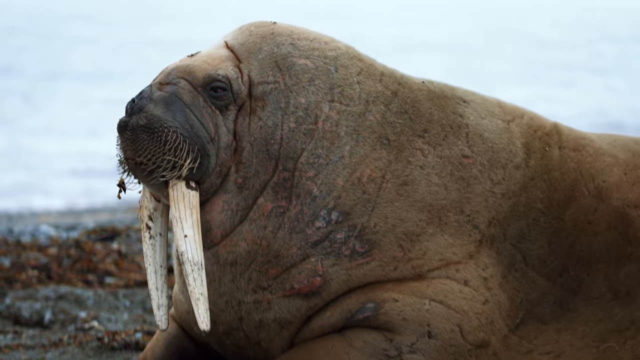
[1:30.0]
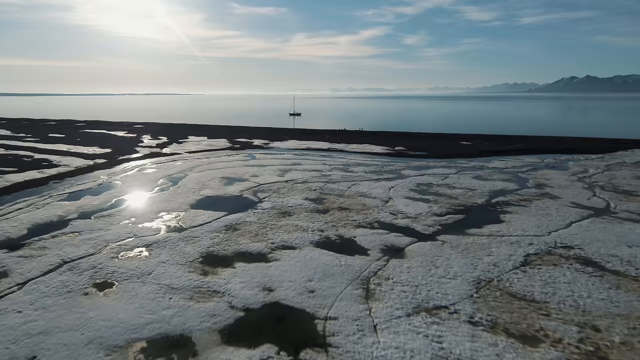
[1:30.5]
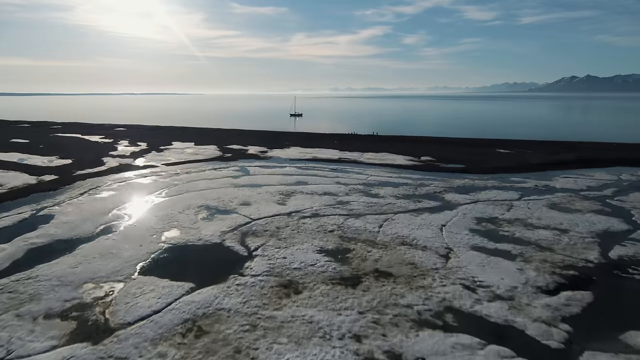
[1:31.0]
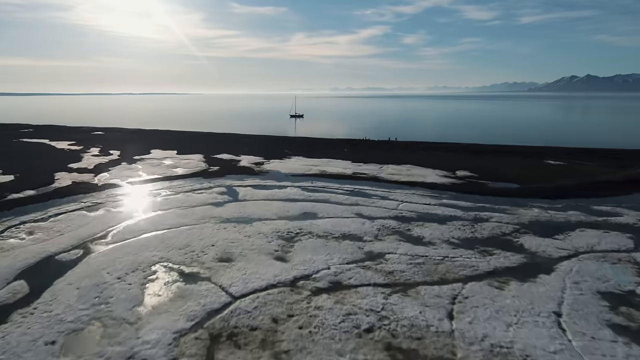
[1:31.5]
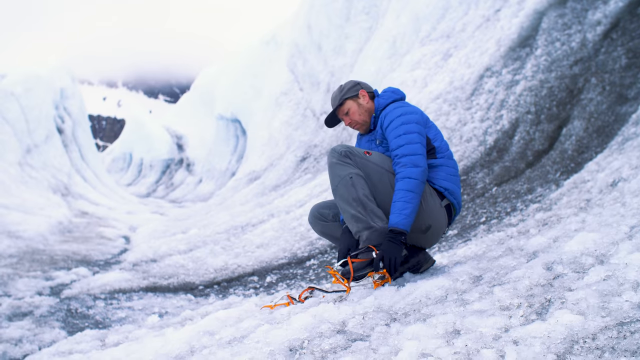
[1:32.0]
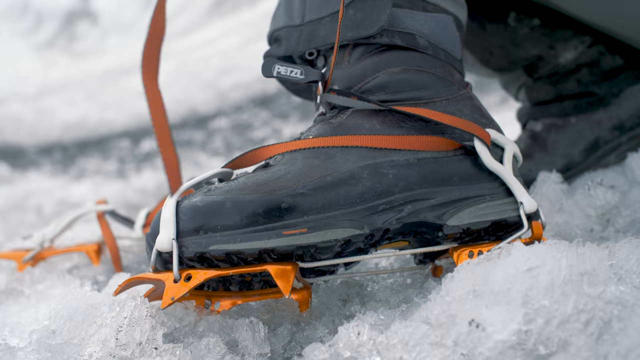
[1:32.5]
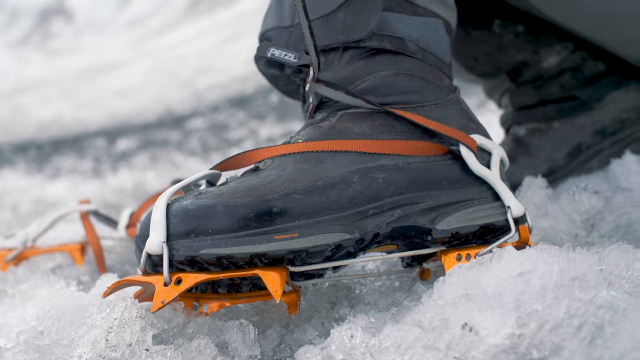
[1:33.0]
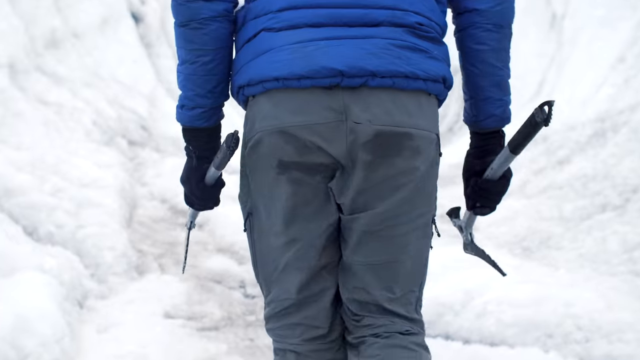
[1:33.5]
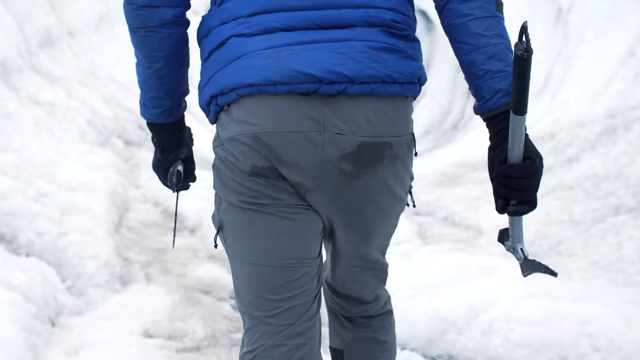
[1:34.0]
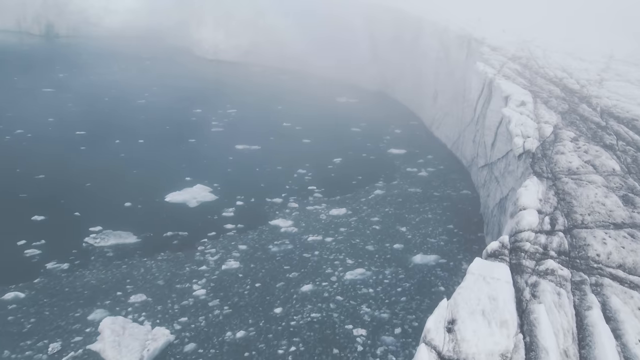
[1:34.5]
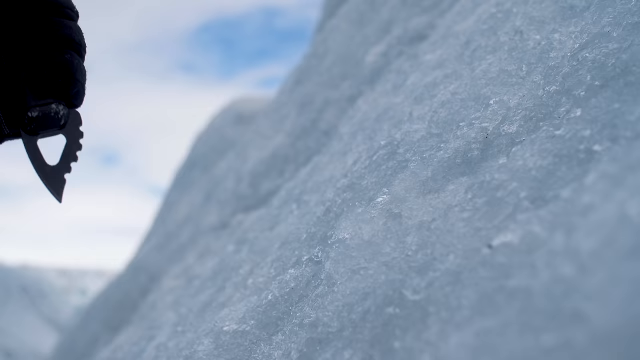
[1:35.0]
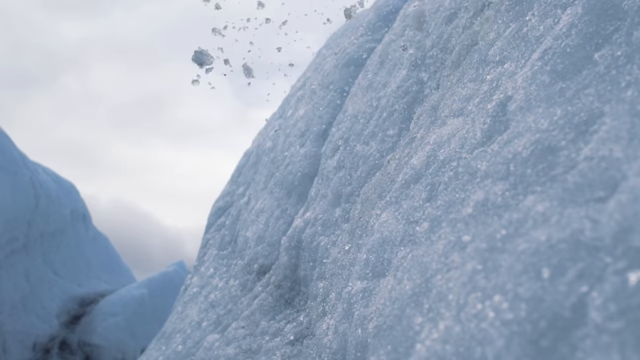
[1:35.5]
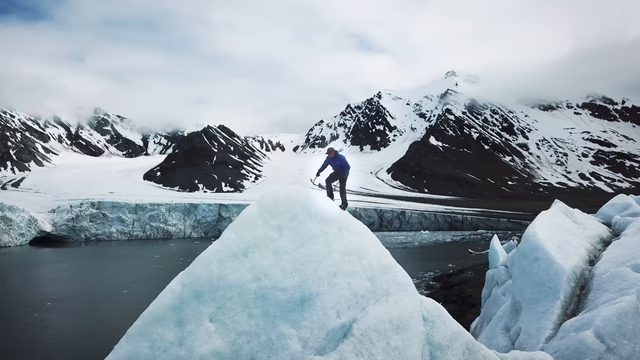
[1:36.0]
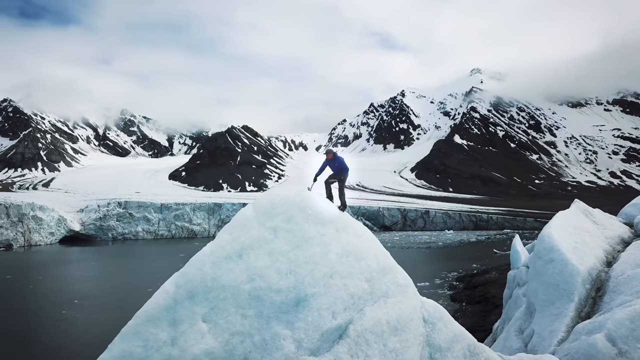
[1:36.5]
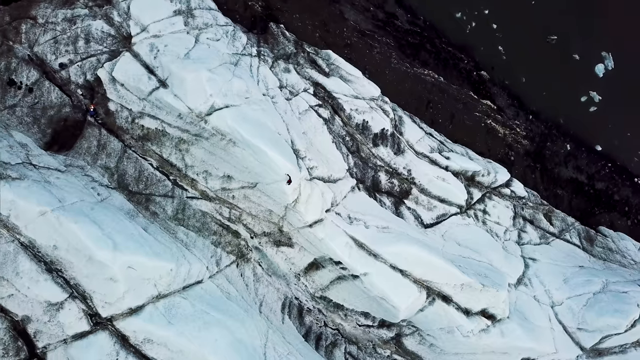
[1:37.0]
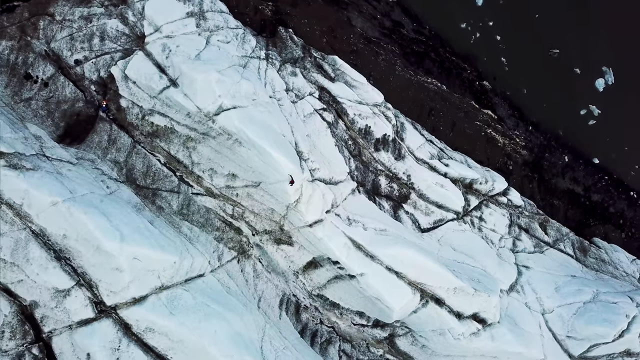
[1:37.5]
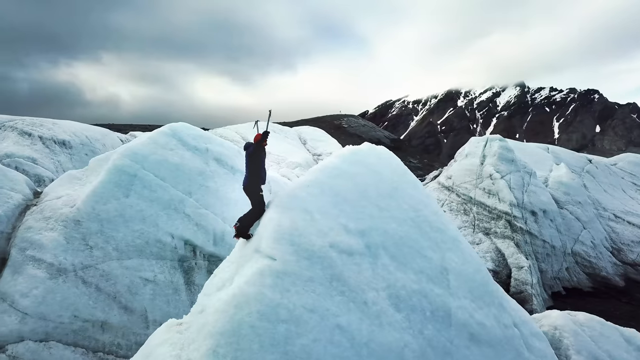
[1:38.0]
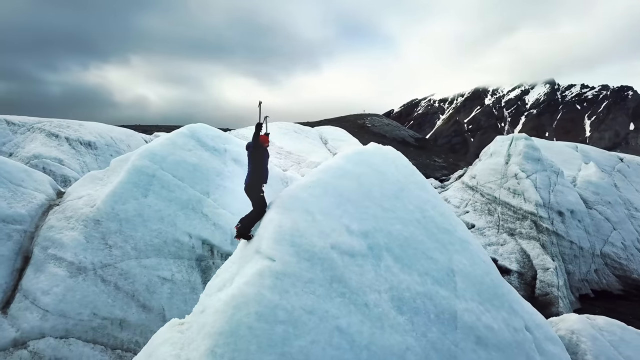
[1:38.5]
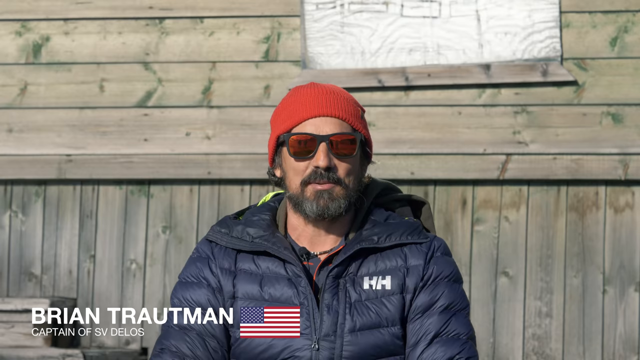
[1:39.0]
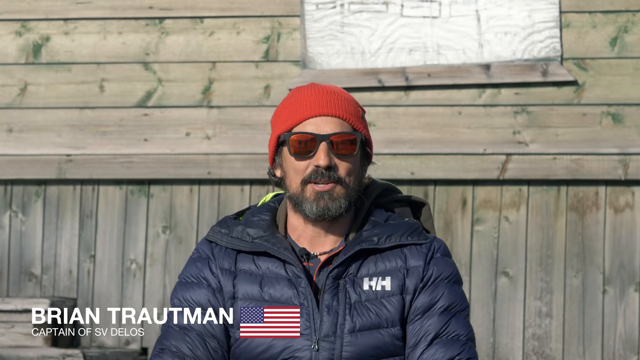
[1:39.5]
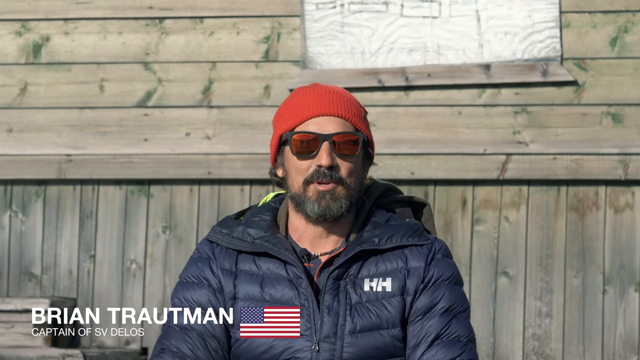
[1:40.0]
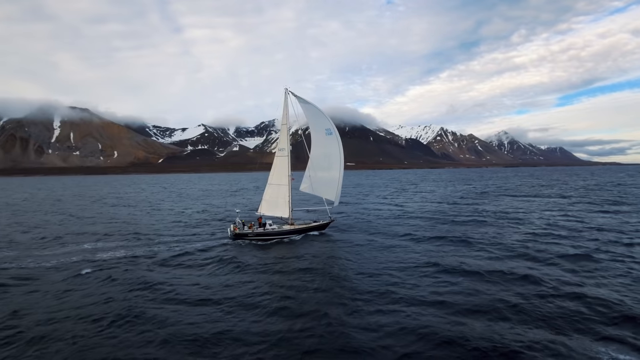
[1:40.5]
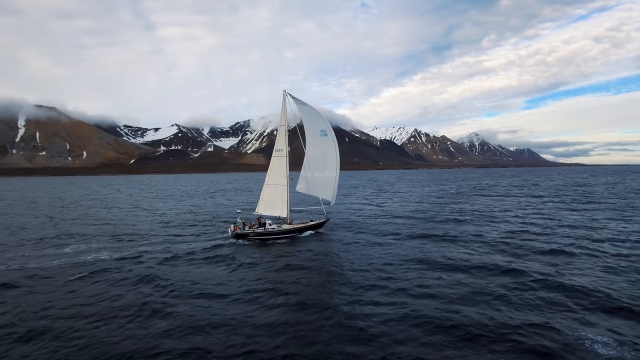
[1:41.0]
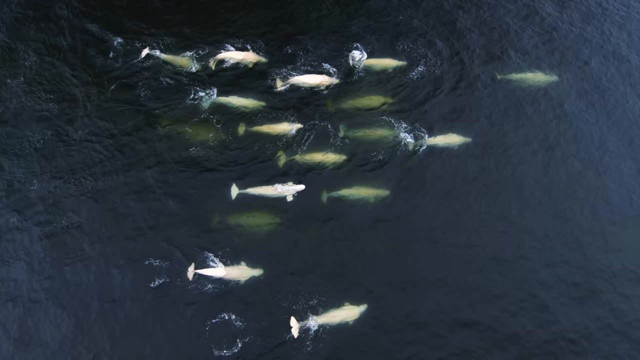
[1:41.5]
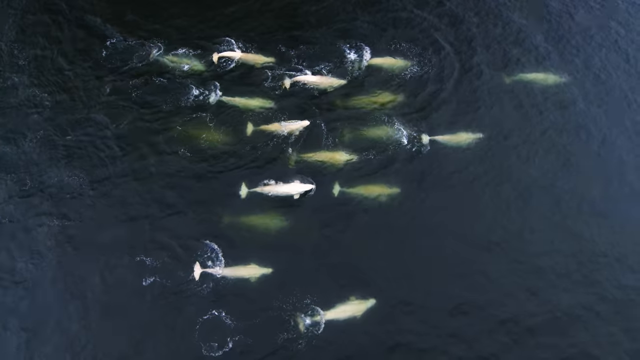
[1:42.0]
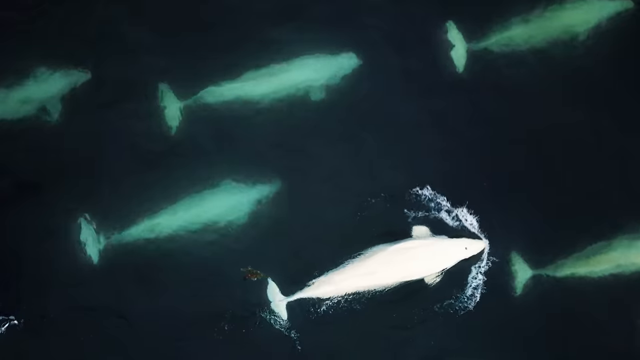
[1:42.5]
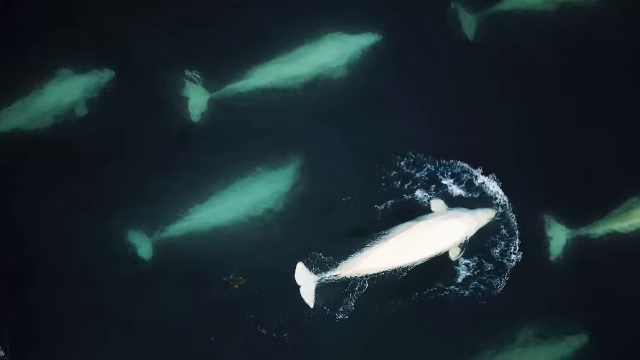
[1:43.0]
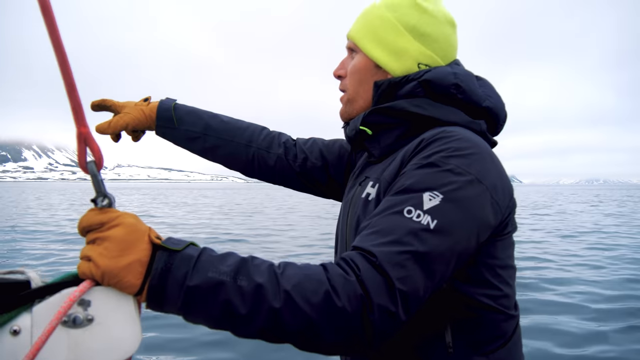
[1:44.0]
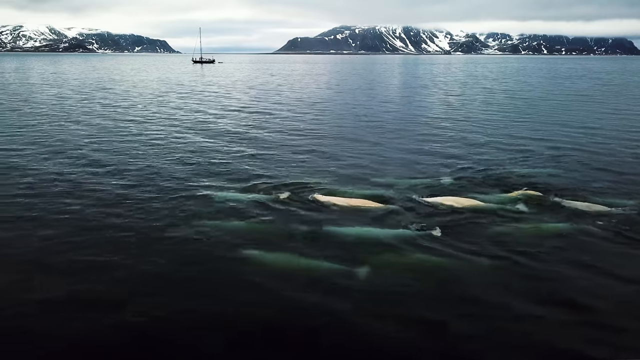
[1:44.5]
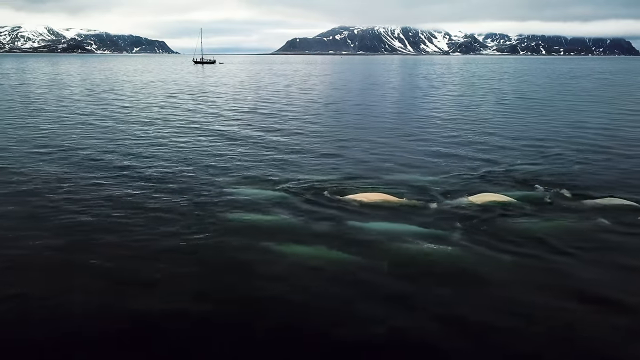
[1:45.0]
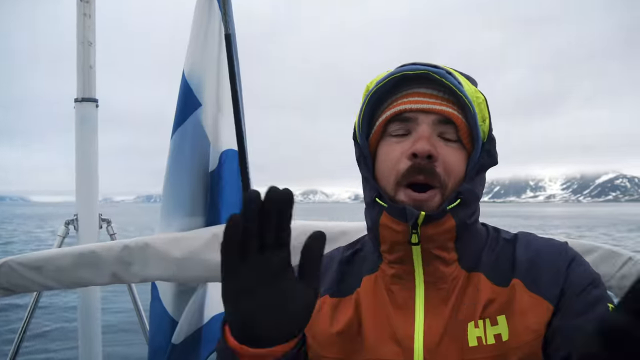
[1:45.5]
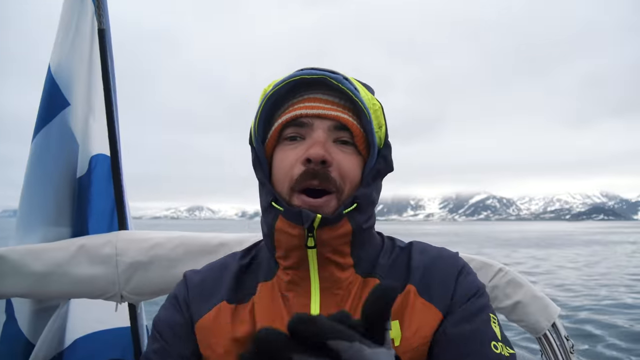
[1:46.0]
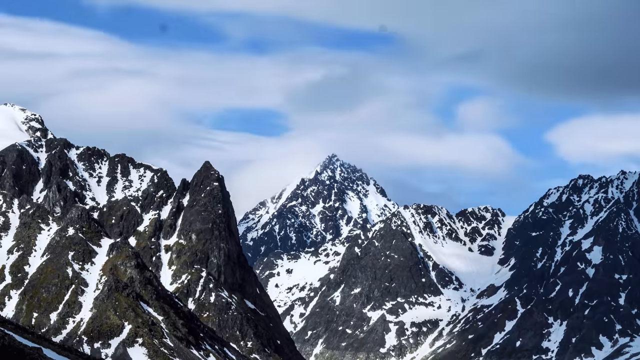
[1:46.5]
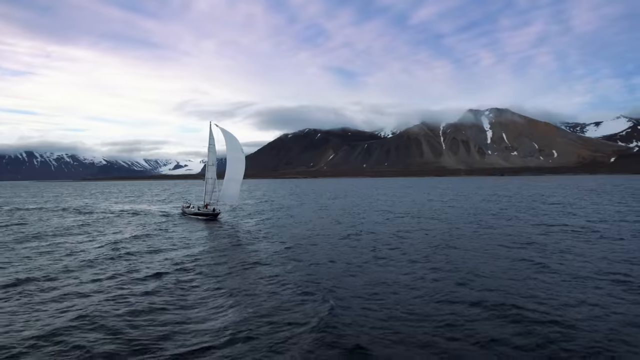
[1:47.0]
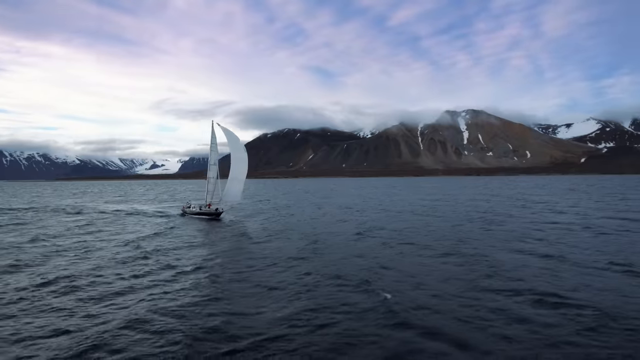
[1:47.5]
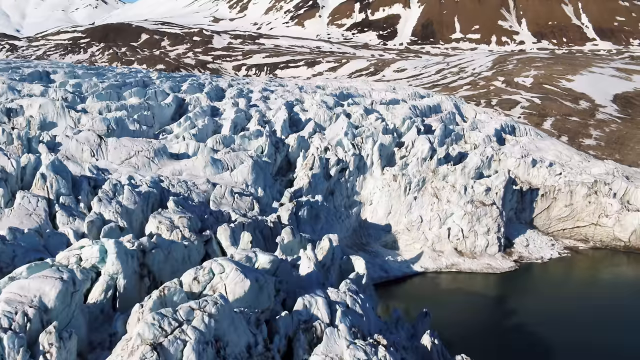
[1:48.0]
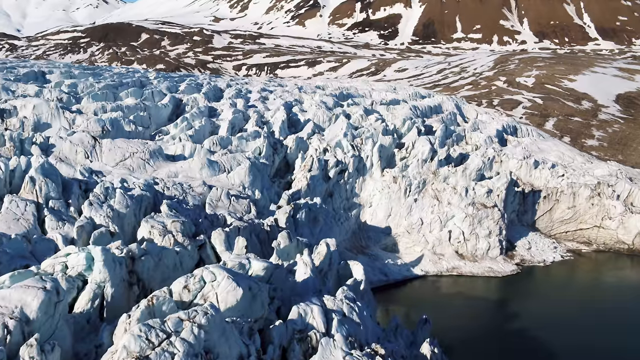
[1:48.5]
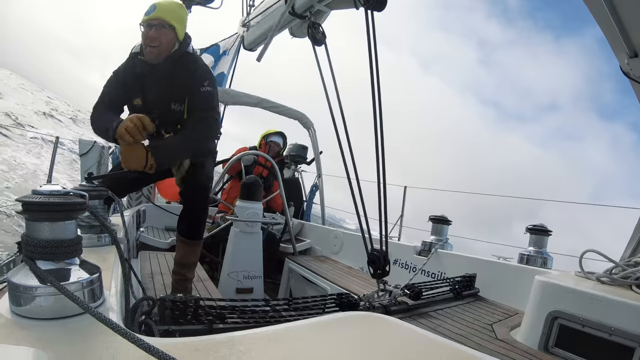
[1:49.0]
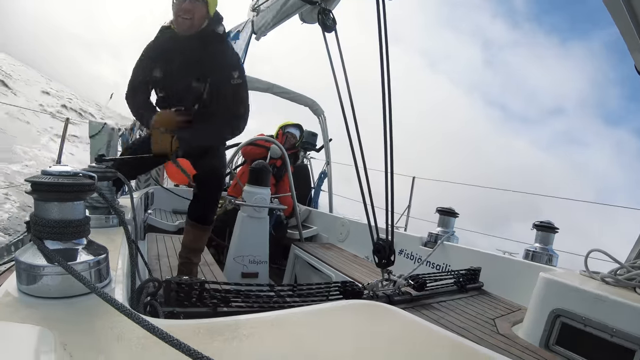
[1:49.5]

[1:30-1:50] A walrus is on the land in the dirt; its tusks look a little dirty. A man puts ice shoes on over his shoes and climbs a mountain with ice picks, reaching the very top and raising his hand in celebration. People sailing see fish and clap at one point. They go through very rough waters, cranking the winches to trim the sails. It looks like much of the ice has melted, with the people looking out at far more water than ice. A school of fish swims. A guy outside observes nature. An aerial view shows a glacier with floating ice and an ice mountain seen from the top.